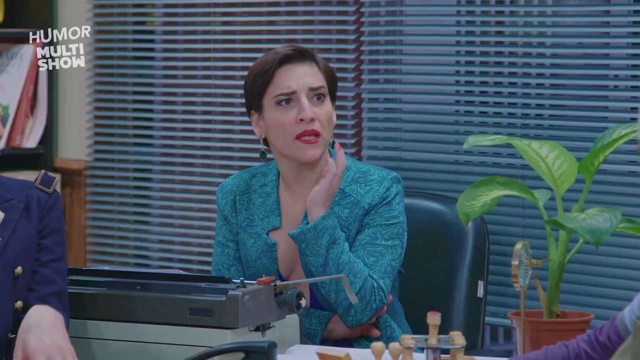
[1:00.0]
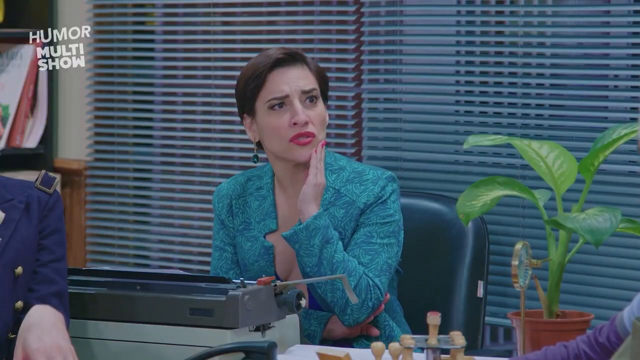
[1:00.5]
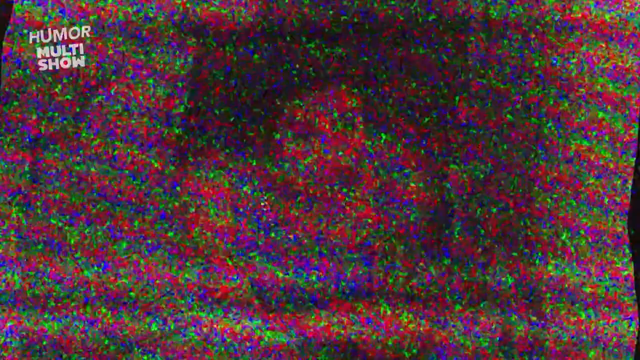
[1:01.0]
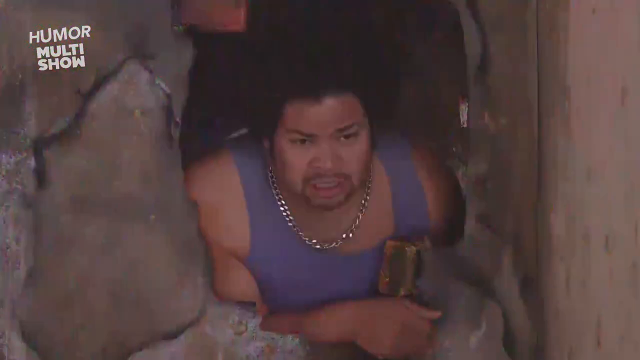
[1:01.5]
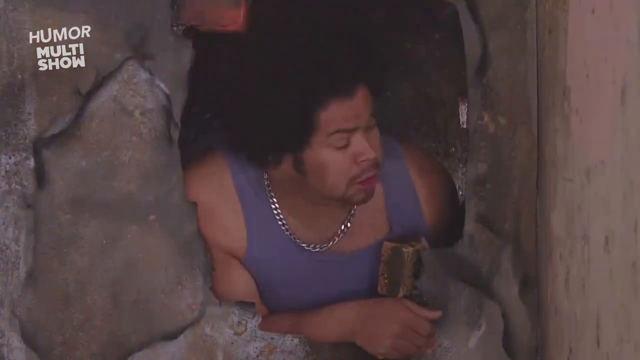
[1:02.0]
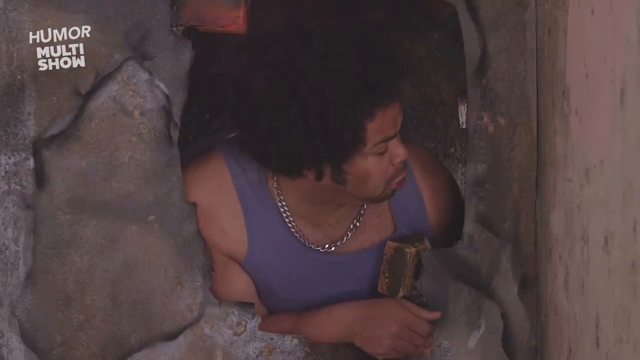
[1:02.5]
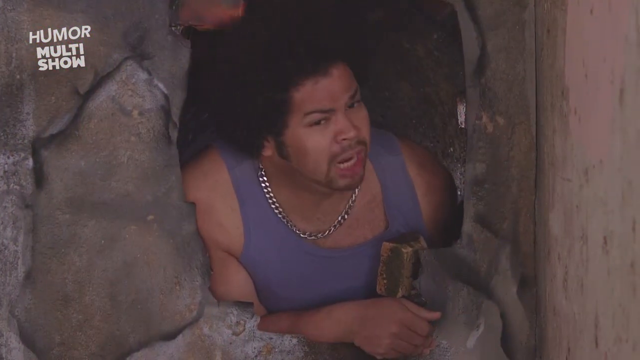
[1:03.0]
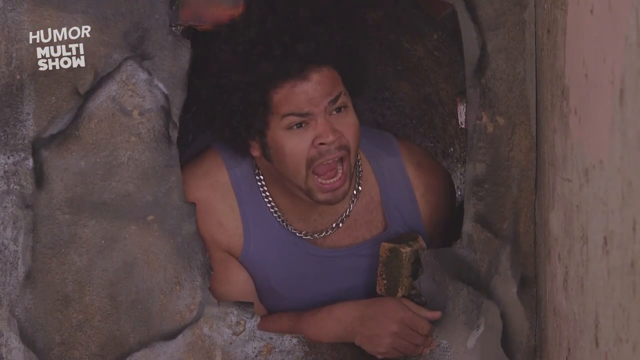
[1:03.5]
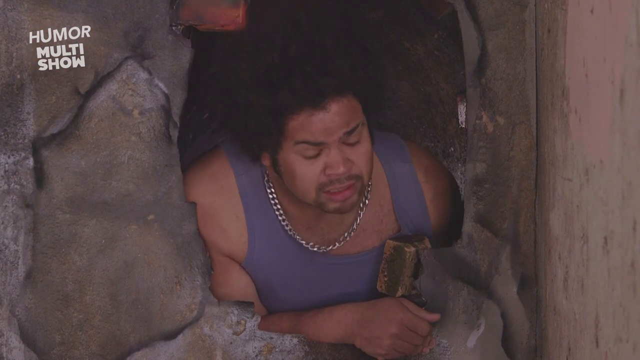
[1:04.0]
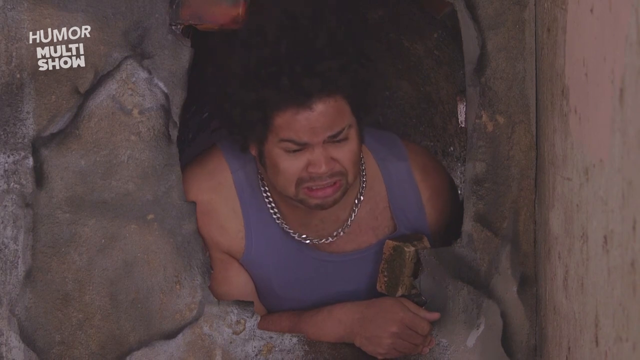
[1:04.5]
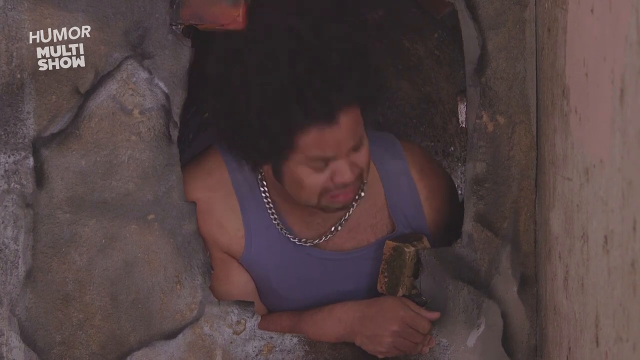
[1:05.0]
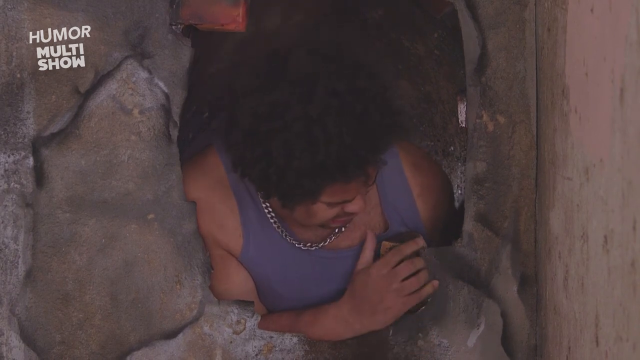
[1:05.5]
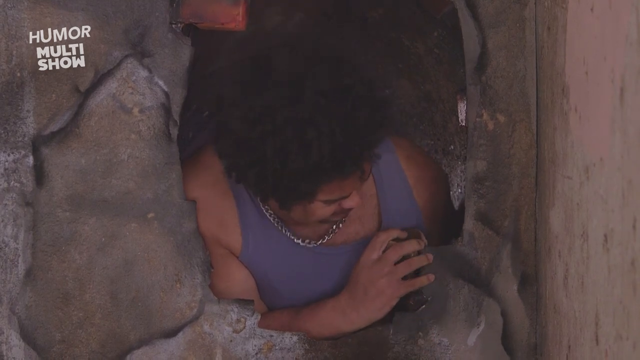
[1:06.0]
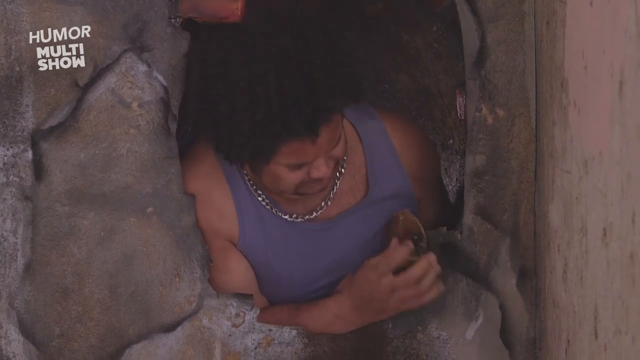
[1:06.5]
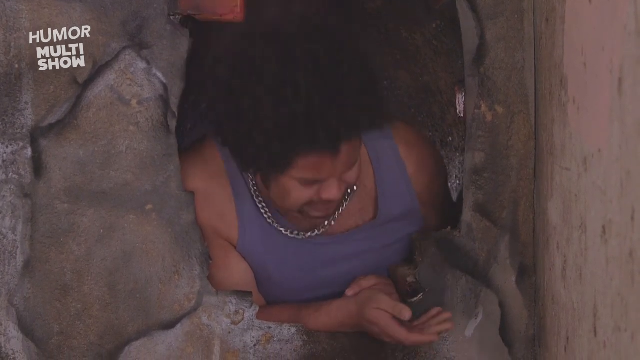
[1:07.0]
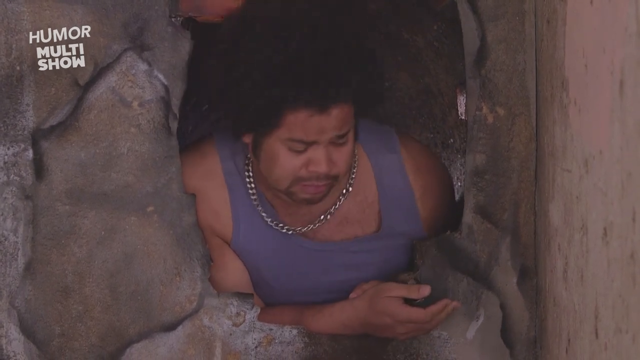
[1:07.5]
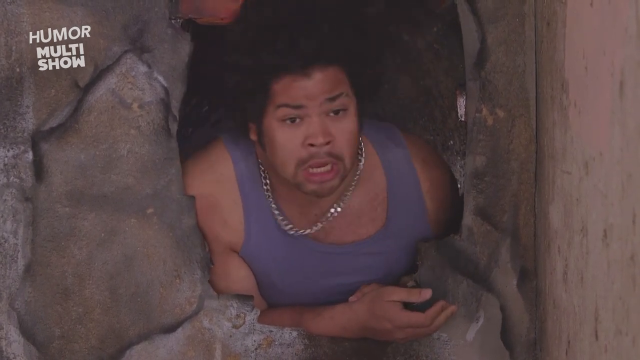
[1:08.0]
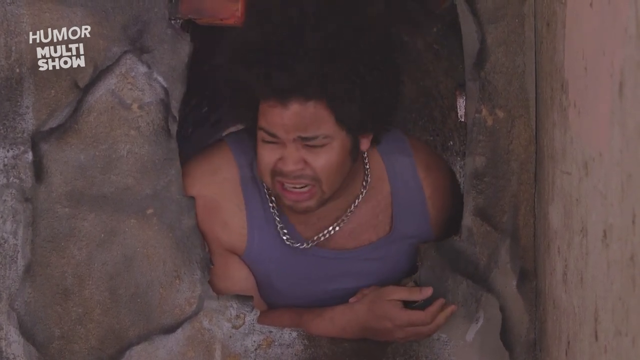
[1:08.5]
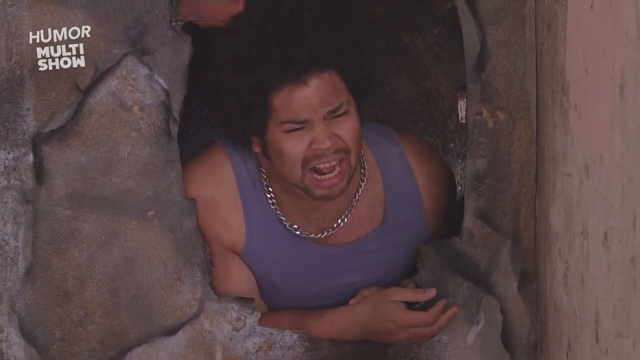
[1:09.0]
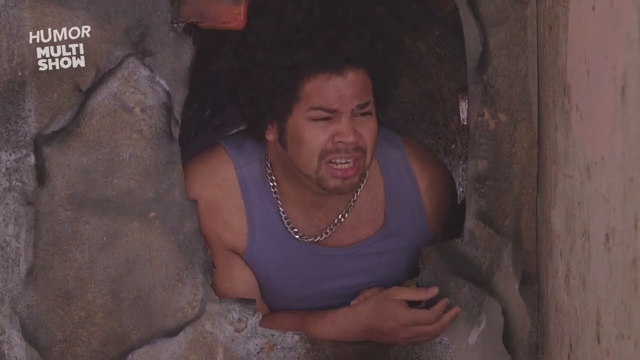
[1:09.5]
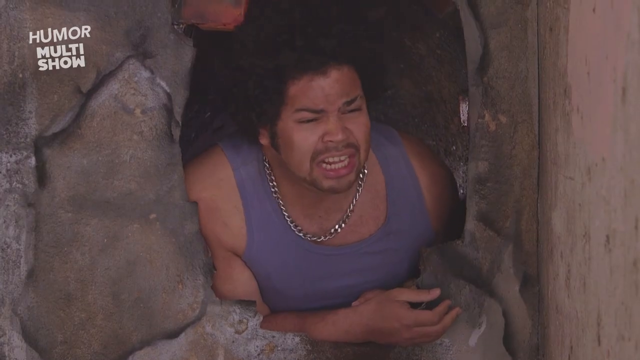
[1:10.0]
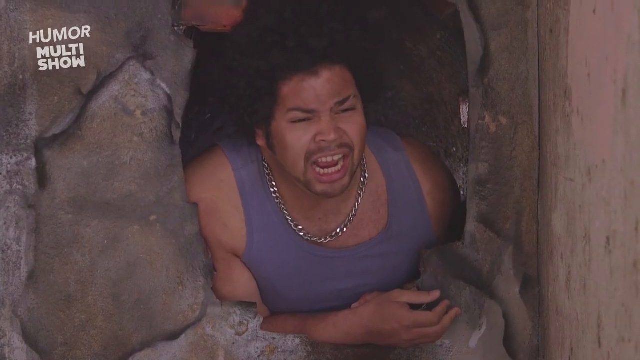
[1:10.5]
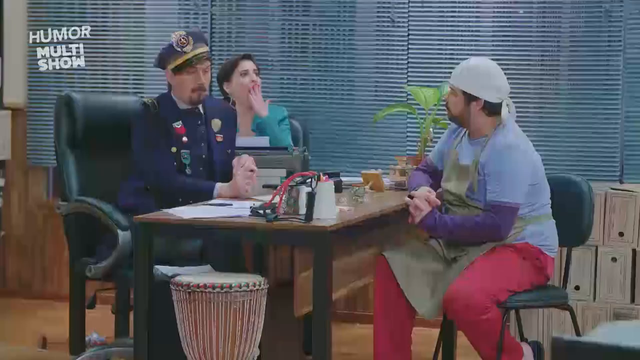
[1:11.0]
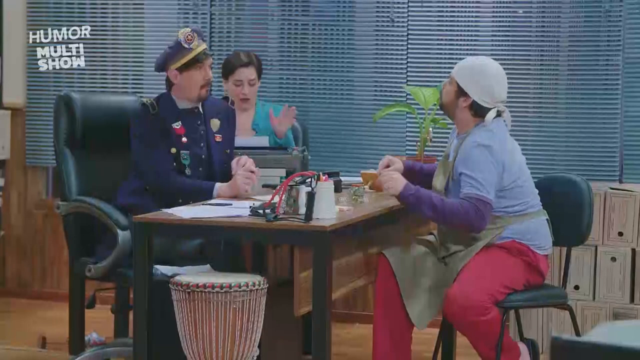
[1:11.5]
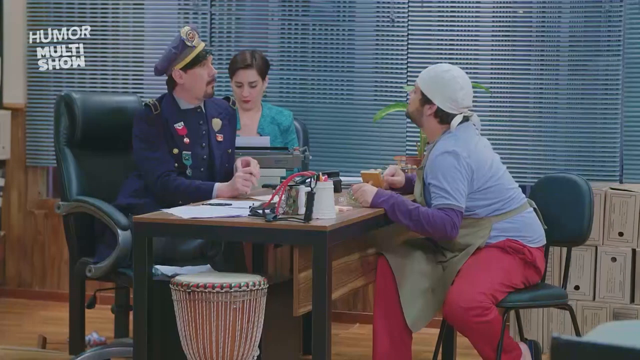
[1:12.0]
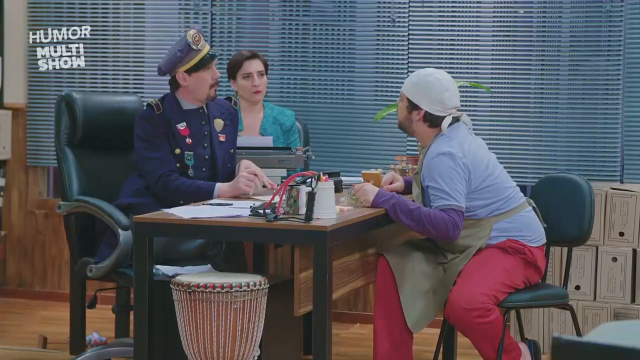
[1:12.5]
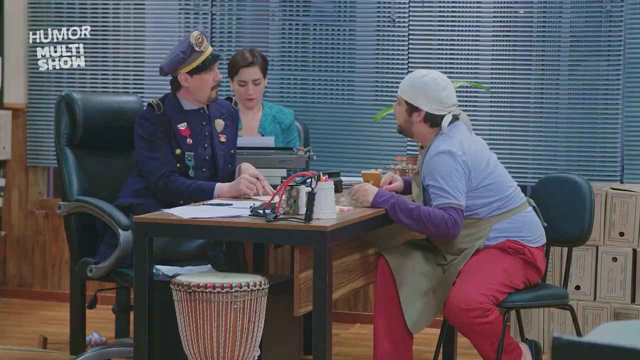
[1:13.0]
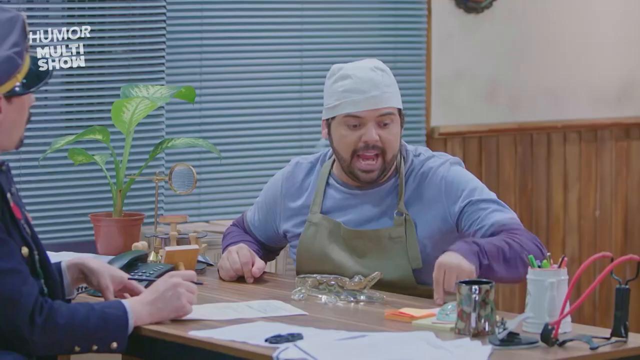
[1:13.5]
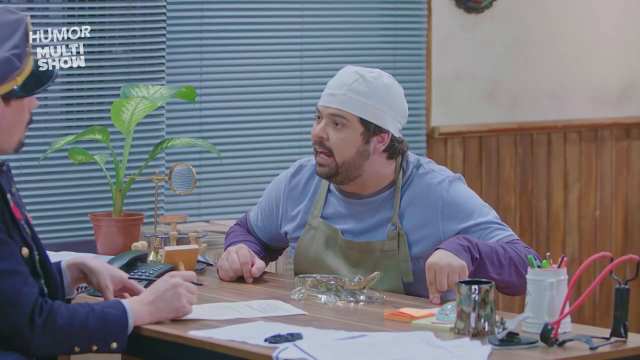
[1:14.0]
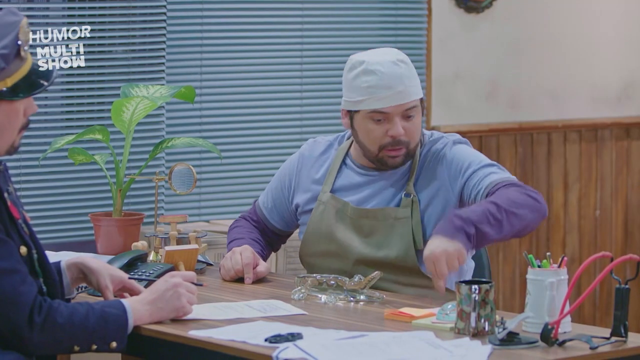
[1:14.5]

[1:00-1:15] The lady at the typewriter talks as if surprised. A new character appears: a man who looks Spanish, with a nice afro, who seems to be stuck in a cave or behind some kind of blocks, though there is a great big hole where it looks like he probably can get out. Most of his body is shown, and he doesn't really look stuck. He wears a blue wife beater shirt with a gold chain. Back in the office, the people are still fussing, and the man in the surgeon's hat is still very animated. The lady at the typewriter is paying attention but starts to yawn, putting her hand to the side of her face as she listens. Later, the man in the surgeon's hat points to the desk, being emphatic.